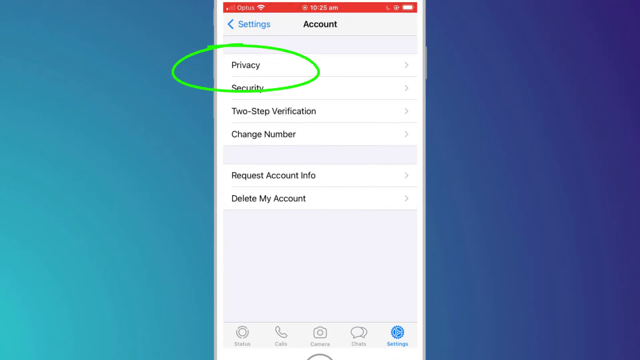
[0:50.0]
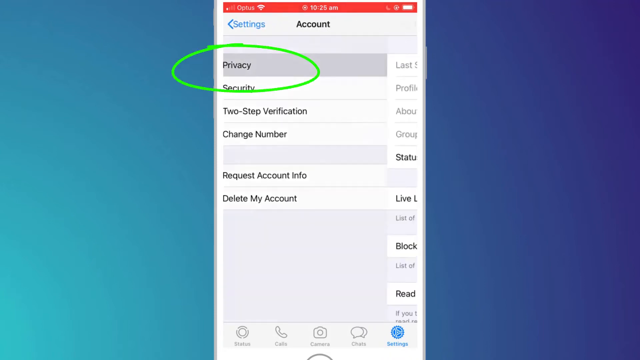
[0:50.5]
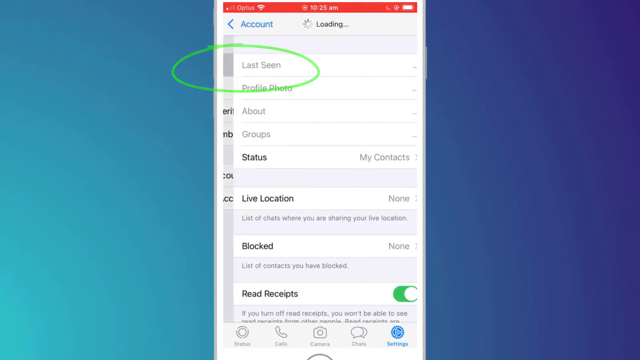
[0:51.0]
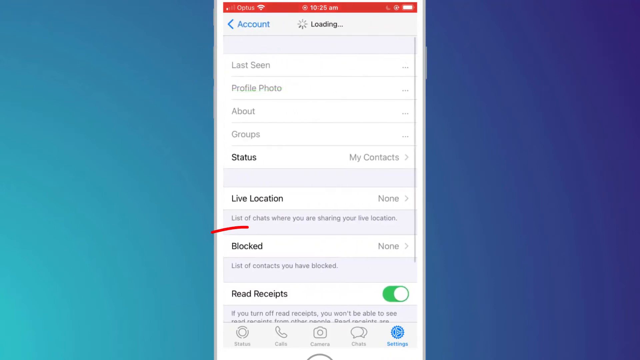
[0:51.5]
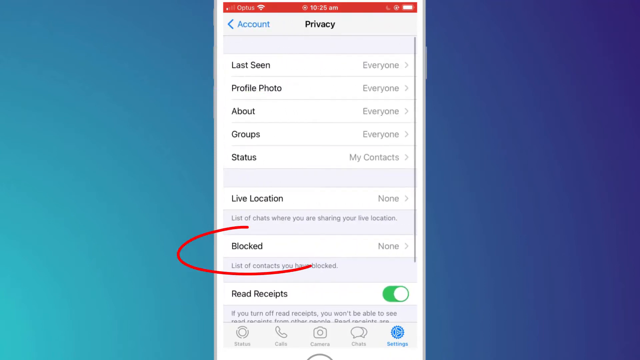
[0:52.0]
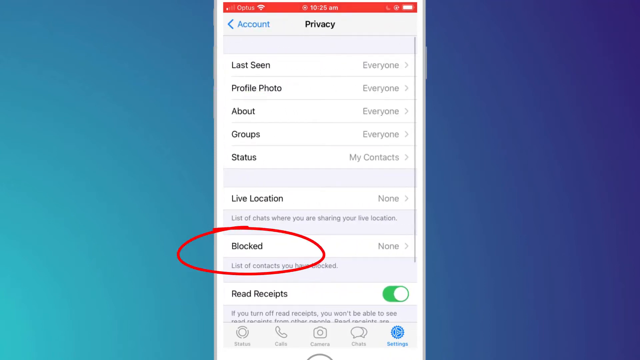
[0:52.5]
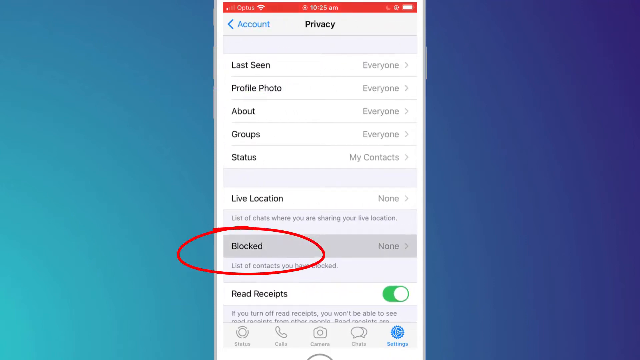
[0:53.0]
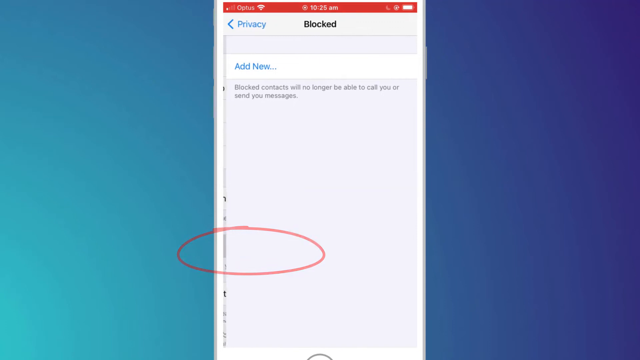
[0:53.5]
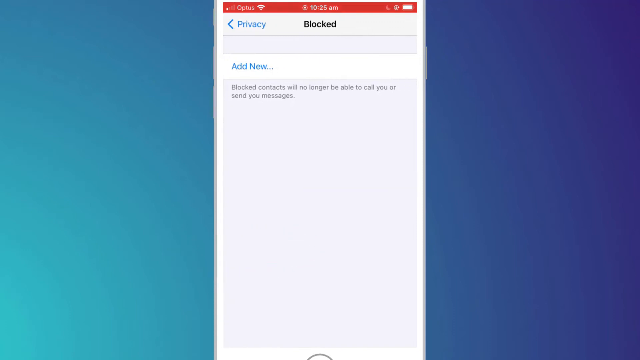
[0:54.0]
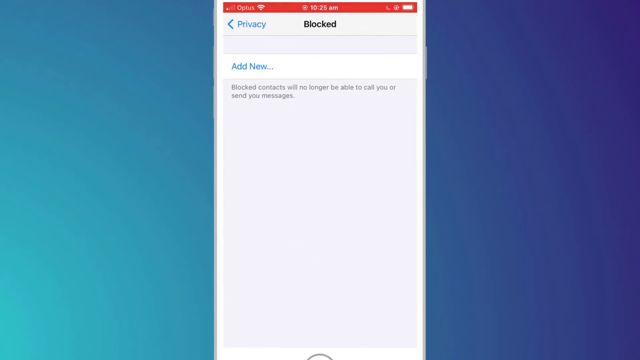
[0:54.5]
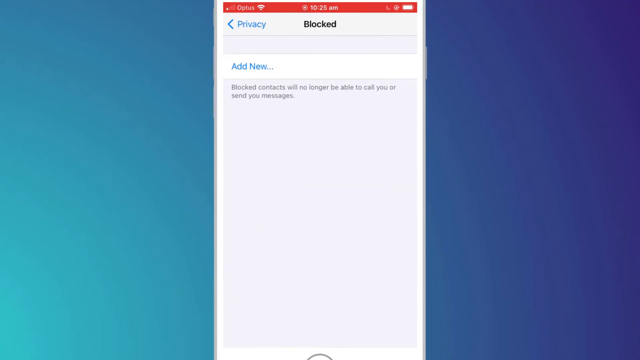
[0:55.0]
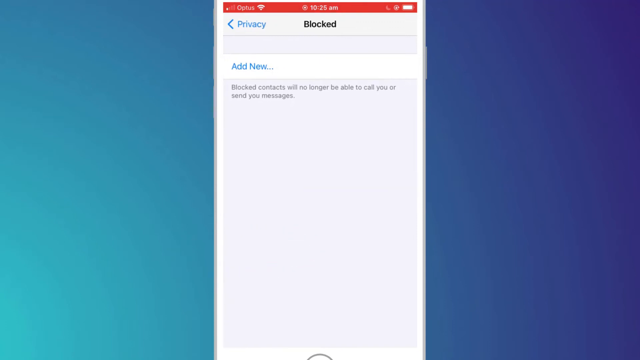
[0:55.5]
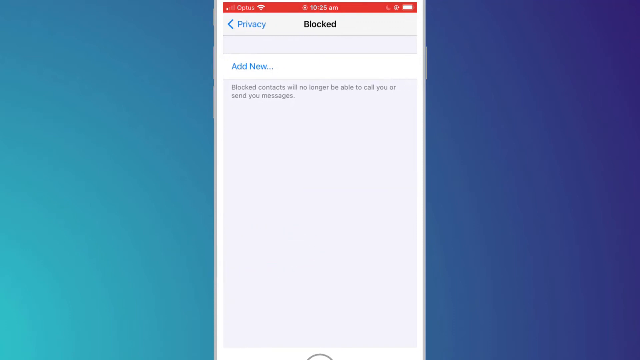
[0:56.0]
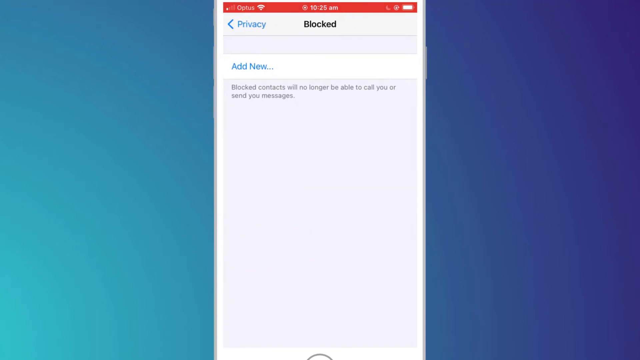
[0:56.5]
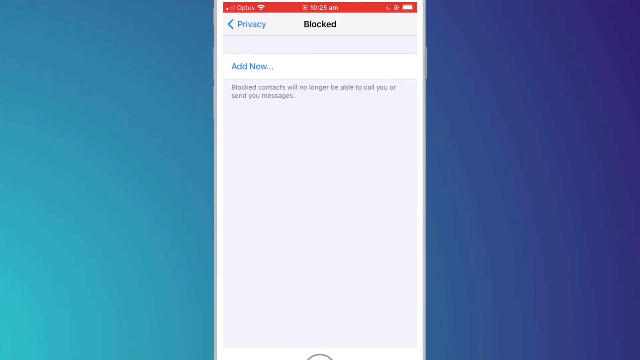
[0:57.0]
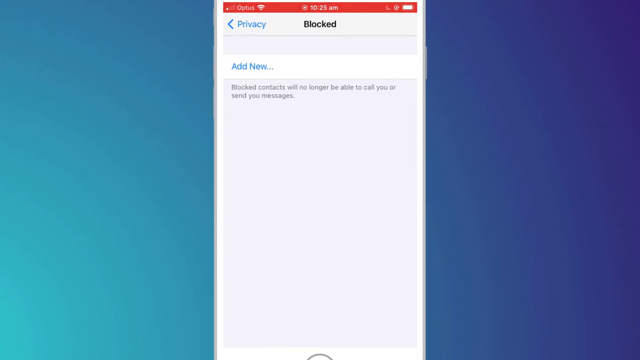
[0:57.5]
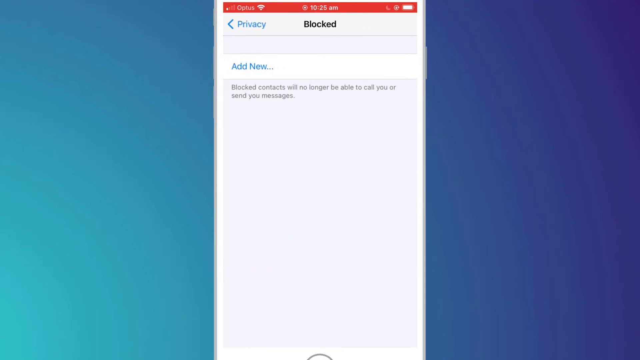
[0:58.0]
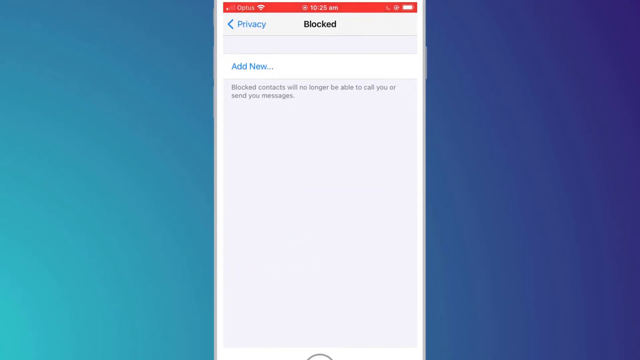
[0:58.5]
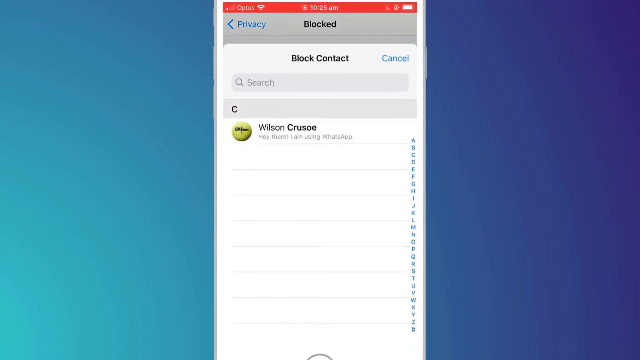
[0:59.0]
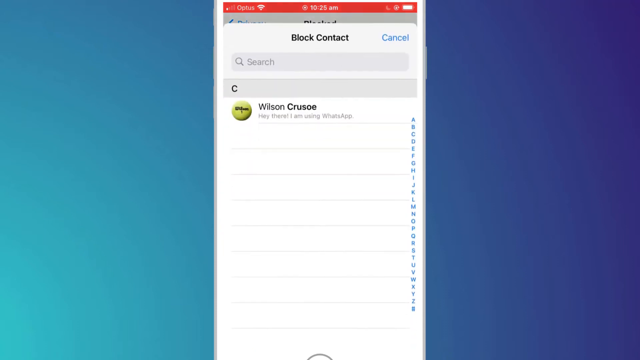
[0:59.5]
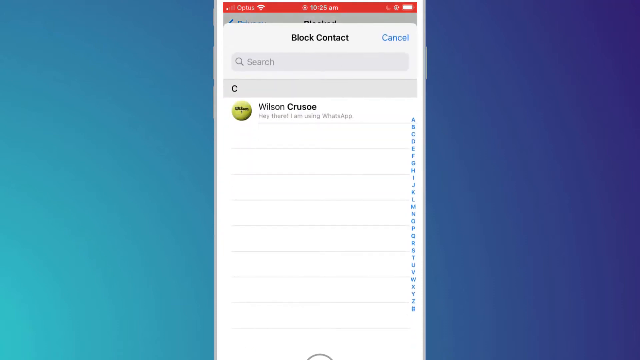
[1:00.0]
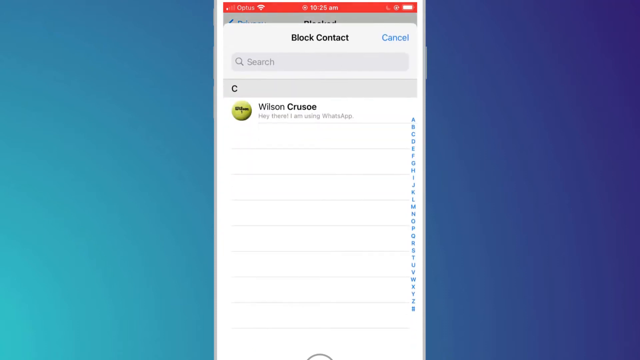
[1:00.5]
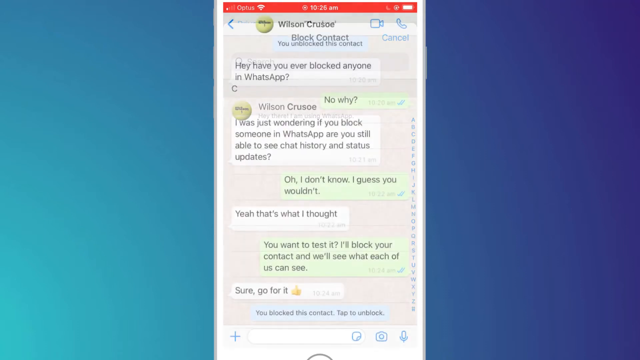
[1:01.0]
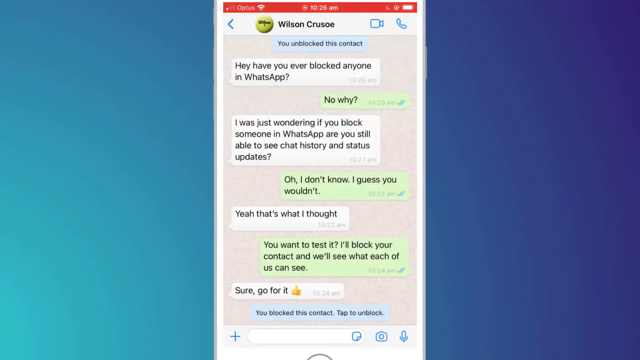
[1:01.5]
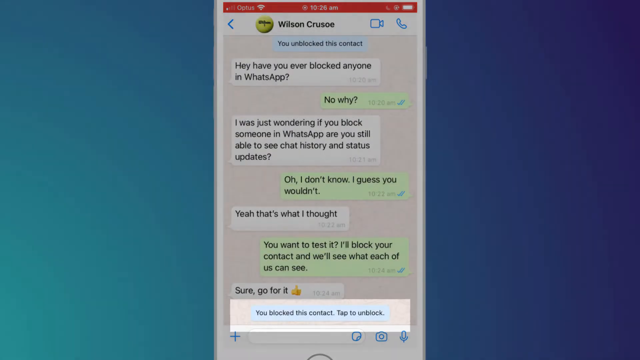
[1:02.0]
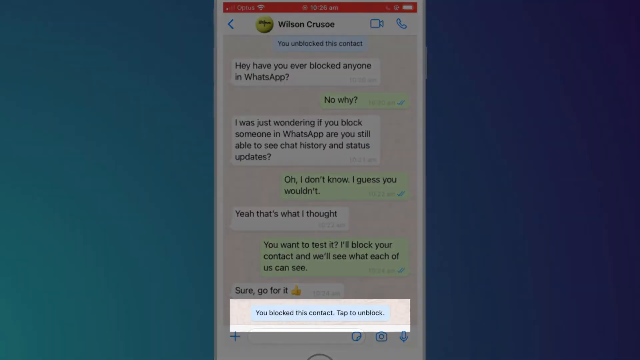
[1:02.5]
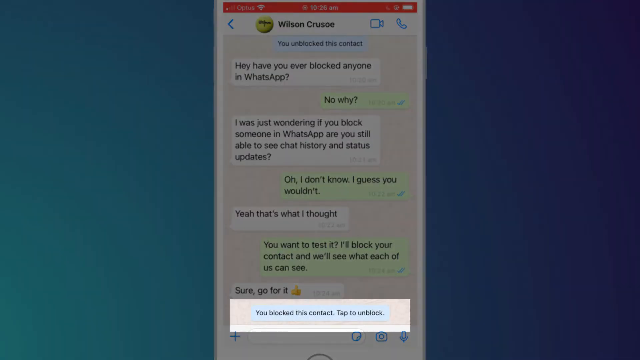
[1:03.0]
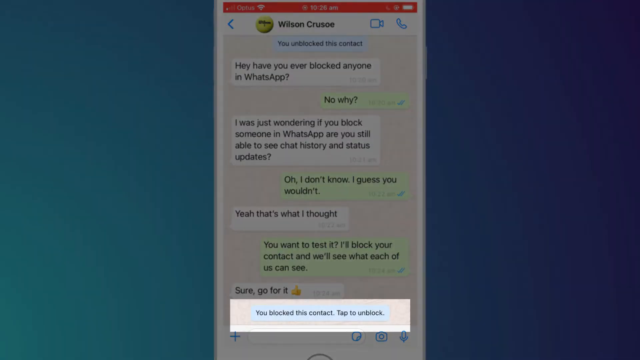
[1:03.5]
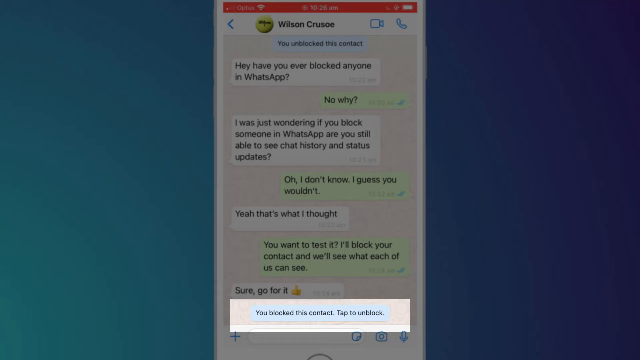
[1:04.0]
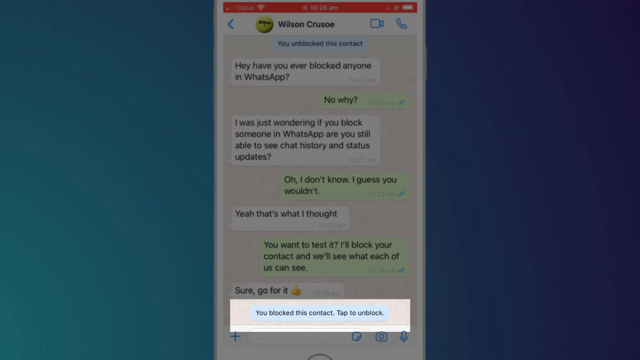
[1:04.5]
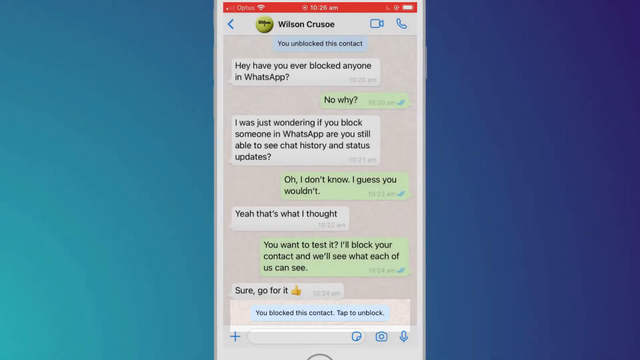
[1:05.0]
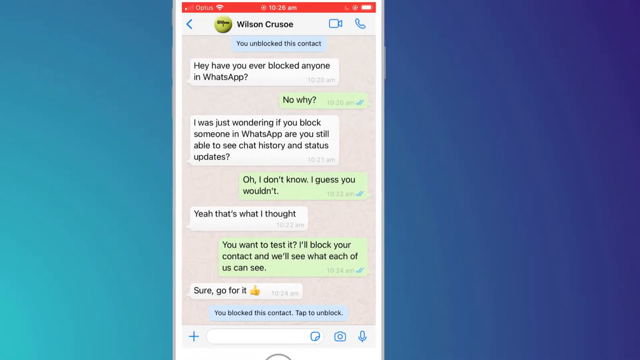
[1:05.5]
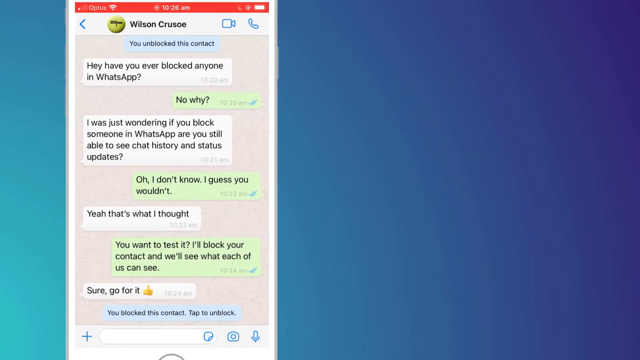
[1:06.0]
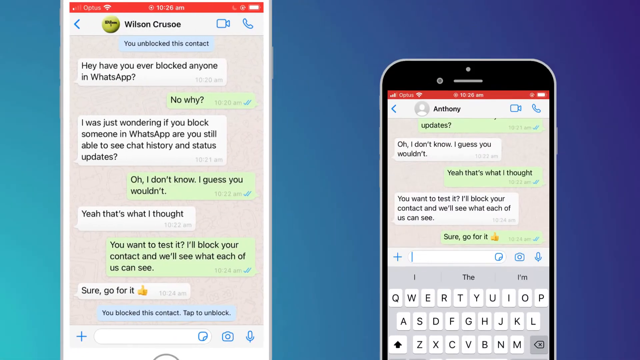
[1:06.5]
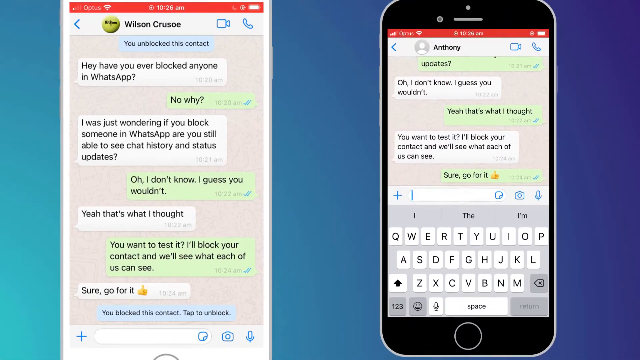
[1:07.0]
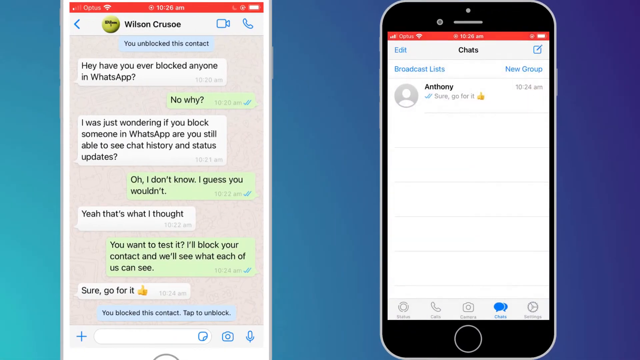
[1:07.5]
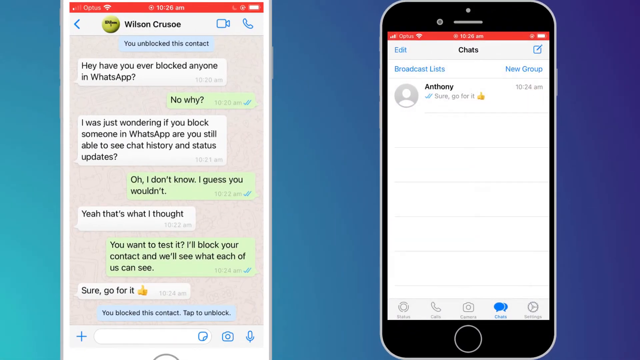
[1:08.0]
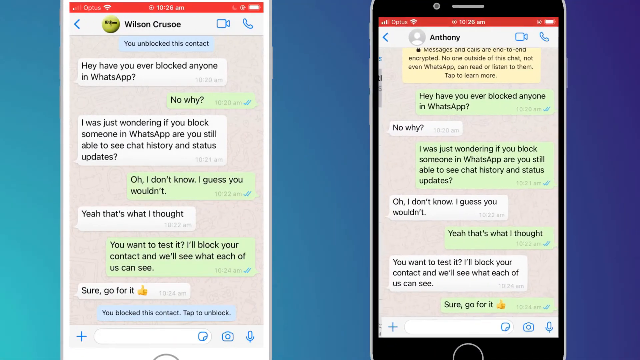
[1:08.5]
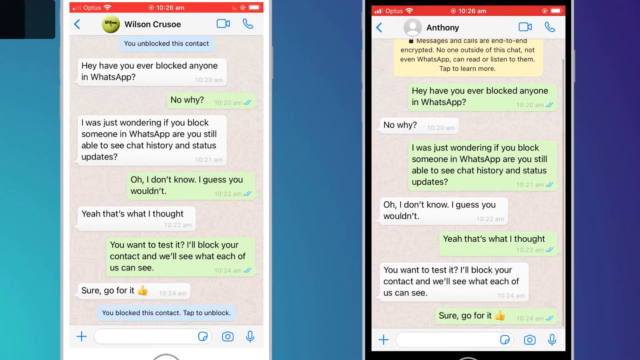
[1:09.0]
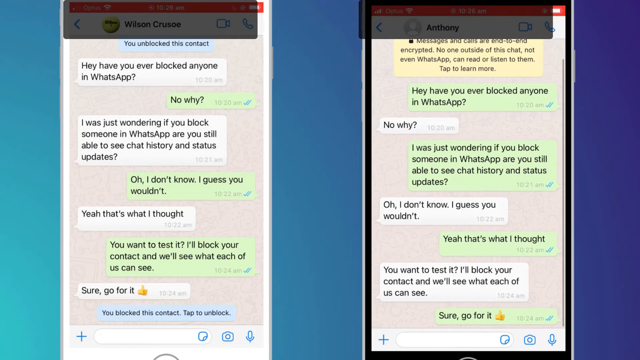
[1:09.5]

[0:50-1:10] An illustrated phone screen is shown on a blue background, light blue on the left and dark blue on the right. It is on the settings page, with "Settings" in blue and "account" to its right. Below "Settings" are "privacy", "security", "two-step verification", "change number", "request account info" and "delete my contact". "Privacy" is circled in green and clicked, opening the privacy page, which lists items including "last seen", "about", "group", "status", "live location" and "block". "Block" is circled in red and clicked. The next page says "add new", with "block contacts will no longer be able to call or send you messages" below it. "Blocked" is clicked and a contact comes up. The screen returns to Wilson Crusoe's text conversation; the rest of the screen darks out while the bottom, reading "you blocked this contact. Tap to unblock", is highlighted. The phone moves to the left and another phone comes down with "Anthony" at the top, apparently Wilson's phone.